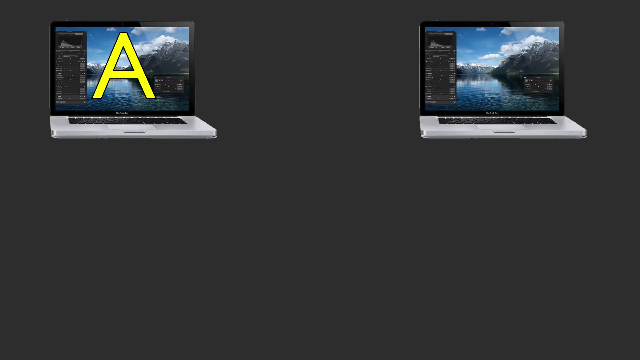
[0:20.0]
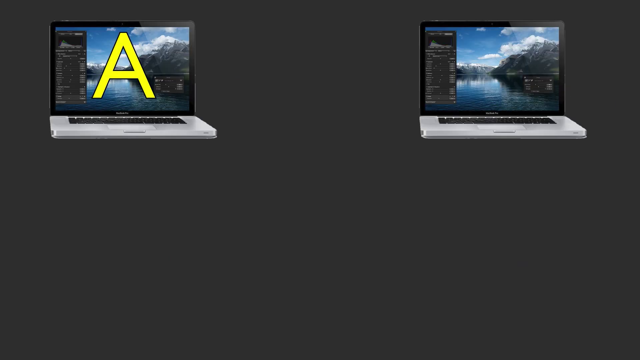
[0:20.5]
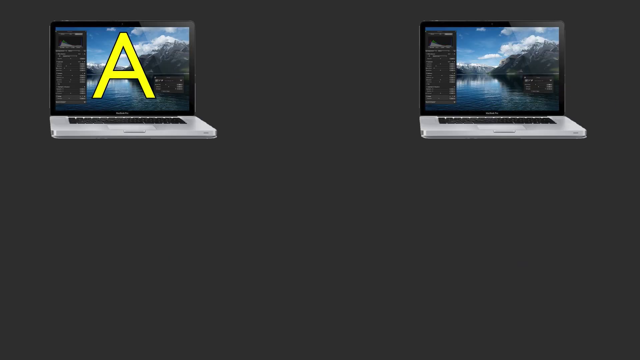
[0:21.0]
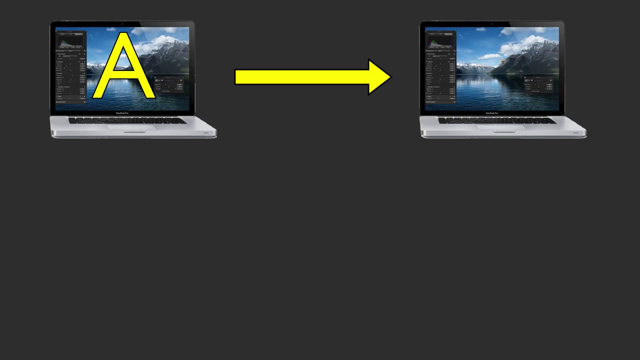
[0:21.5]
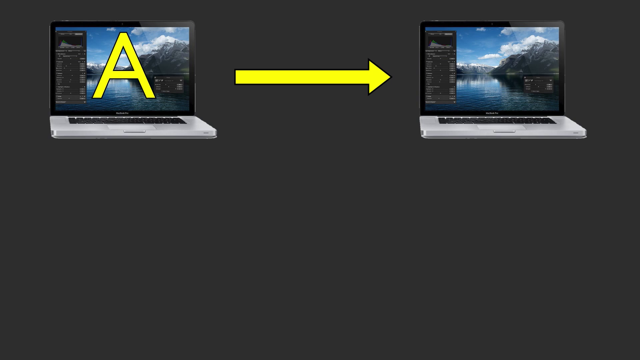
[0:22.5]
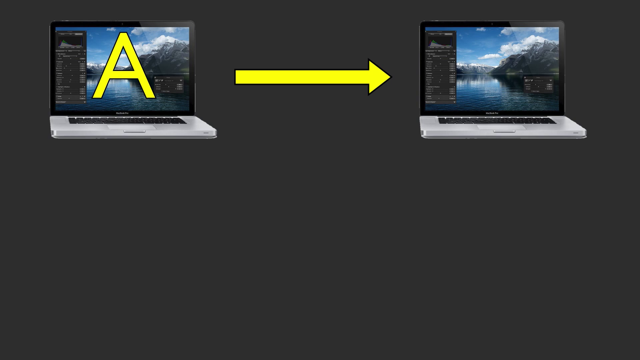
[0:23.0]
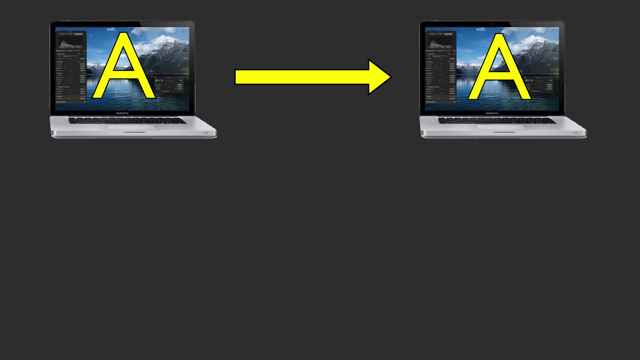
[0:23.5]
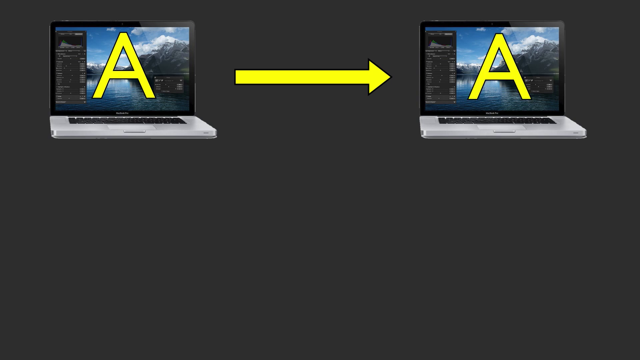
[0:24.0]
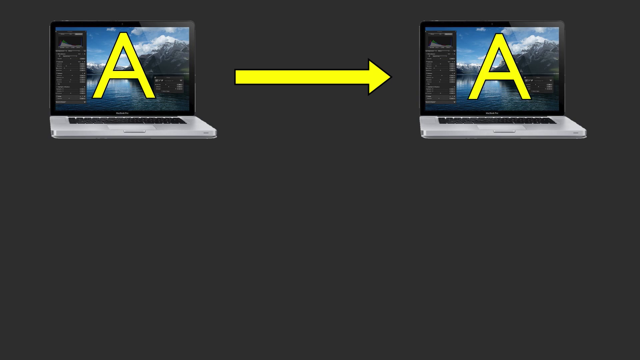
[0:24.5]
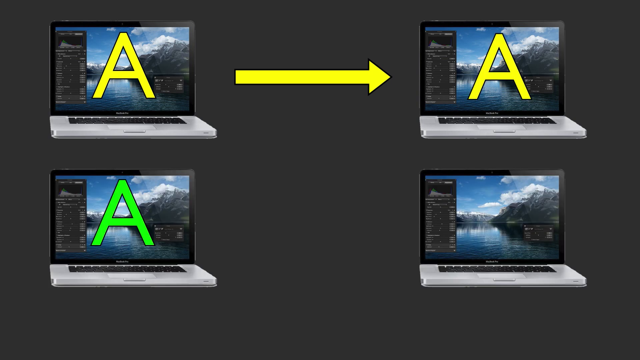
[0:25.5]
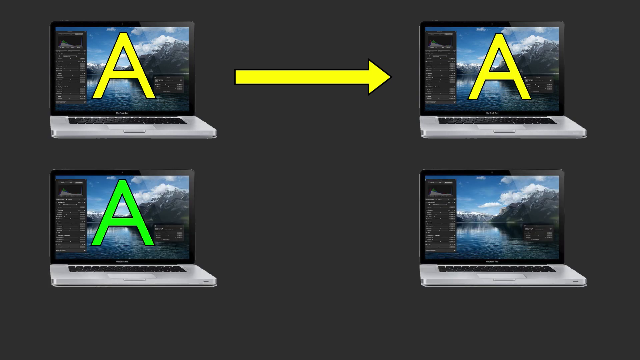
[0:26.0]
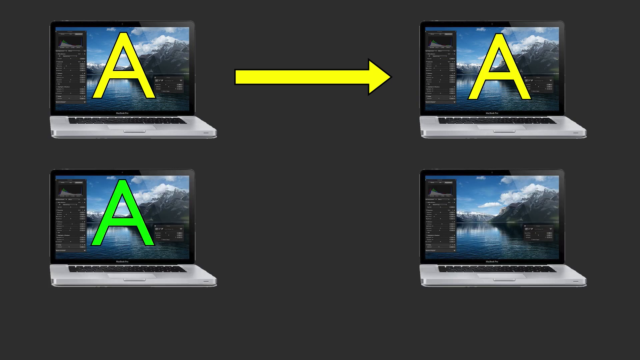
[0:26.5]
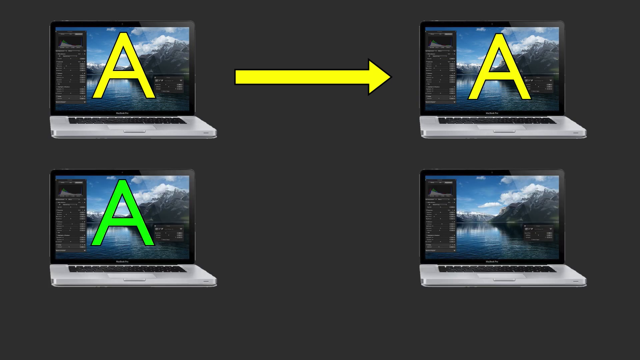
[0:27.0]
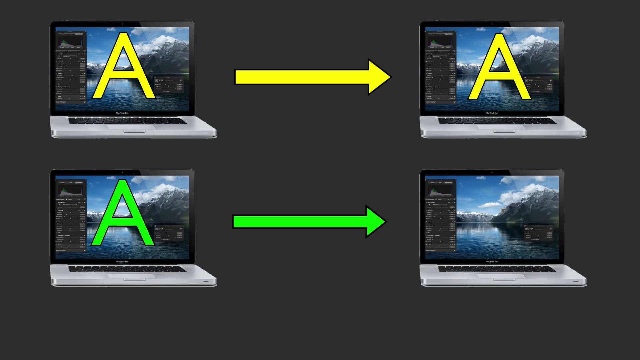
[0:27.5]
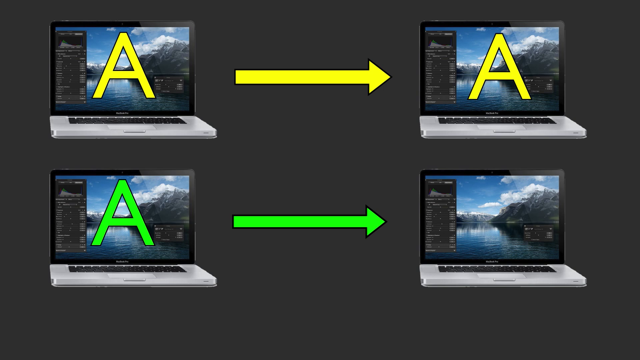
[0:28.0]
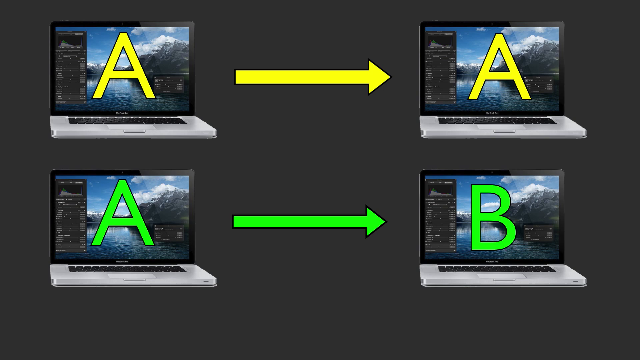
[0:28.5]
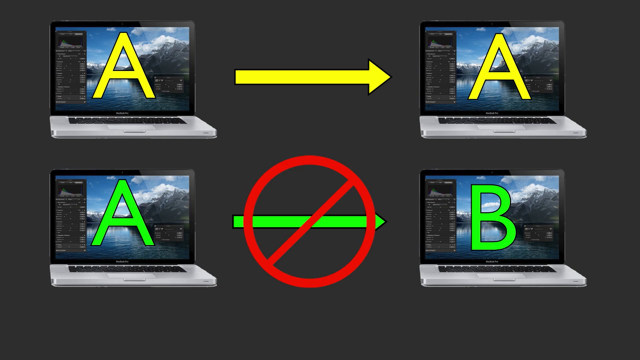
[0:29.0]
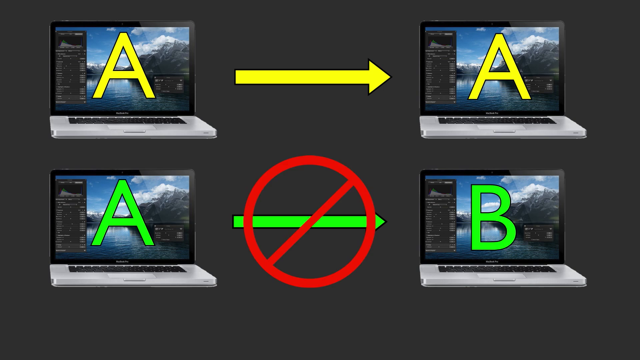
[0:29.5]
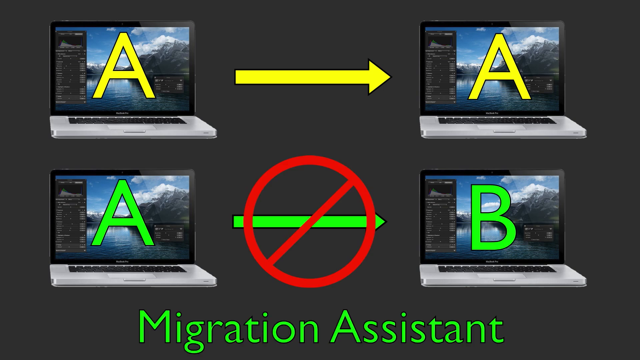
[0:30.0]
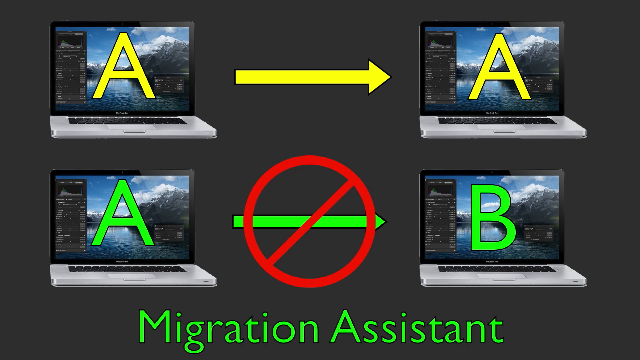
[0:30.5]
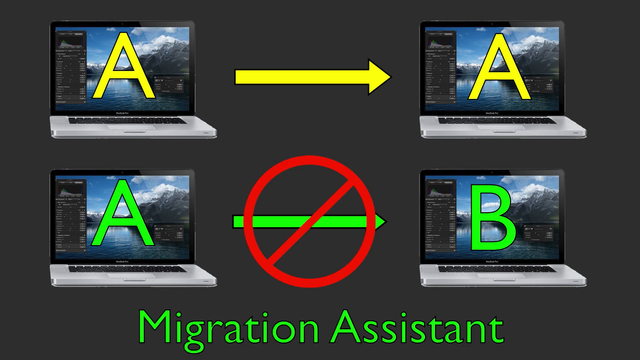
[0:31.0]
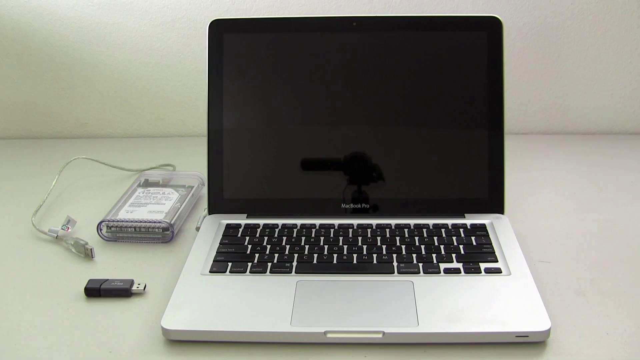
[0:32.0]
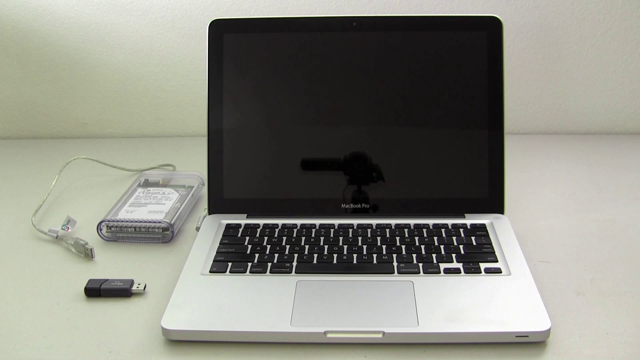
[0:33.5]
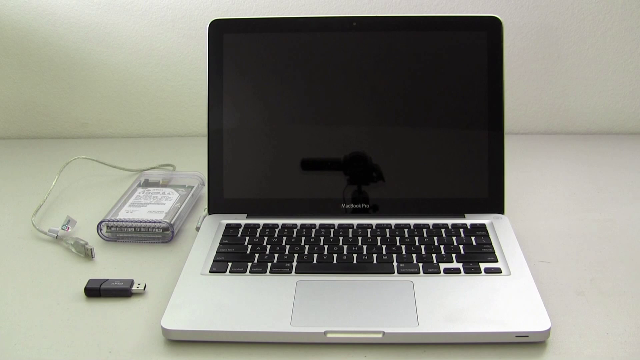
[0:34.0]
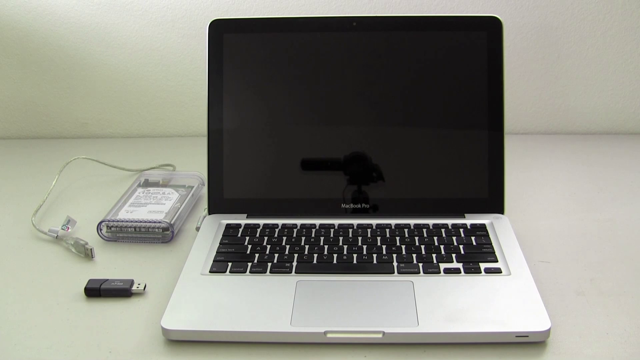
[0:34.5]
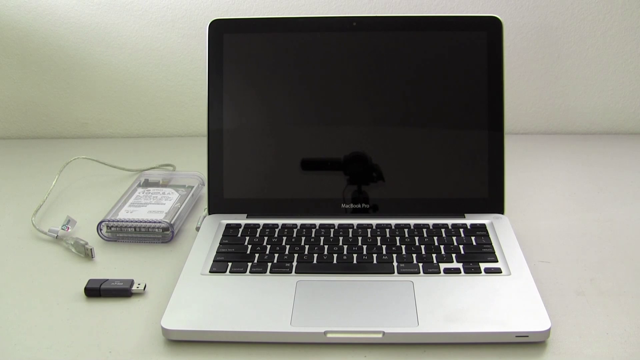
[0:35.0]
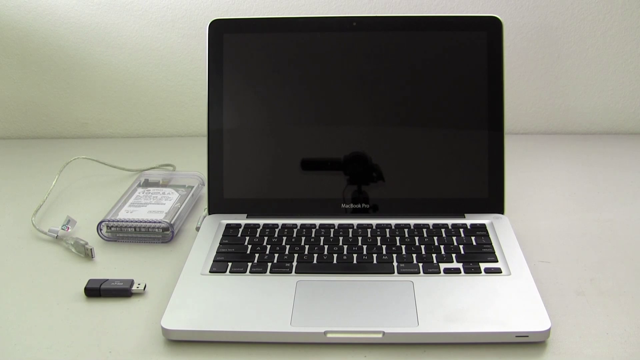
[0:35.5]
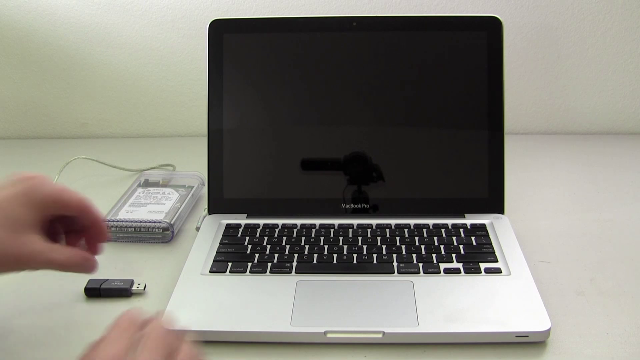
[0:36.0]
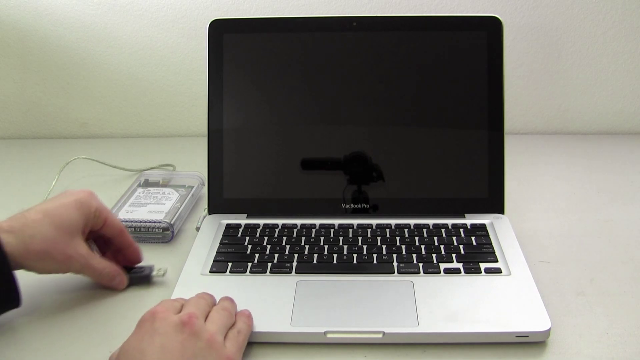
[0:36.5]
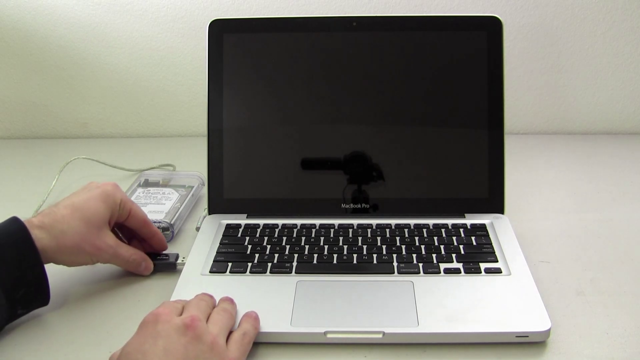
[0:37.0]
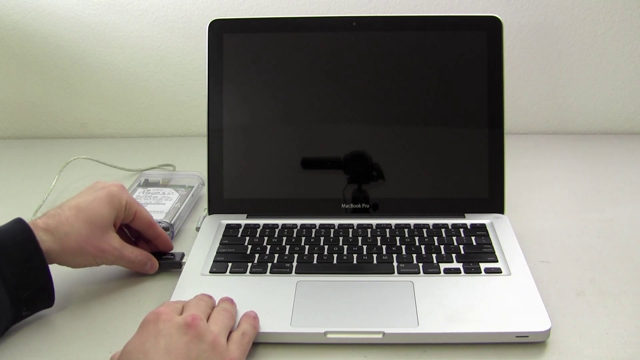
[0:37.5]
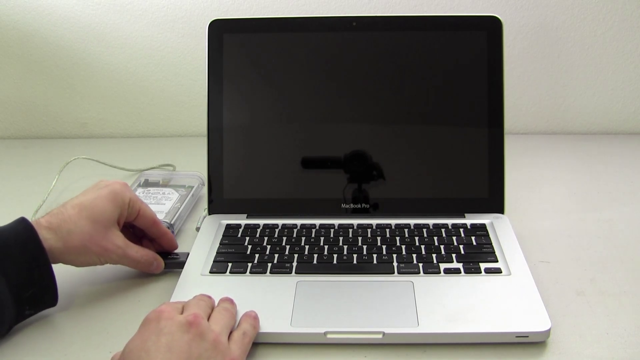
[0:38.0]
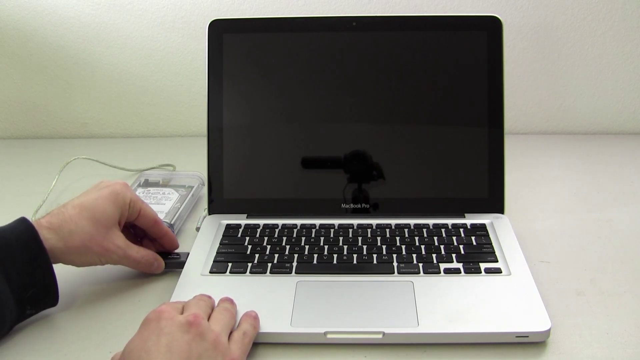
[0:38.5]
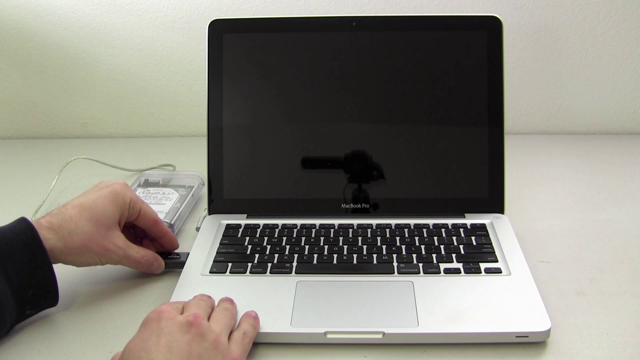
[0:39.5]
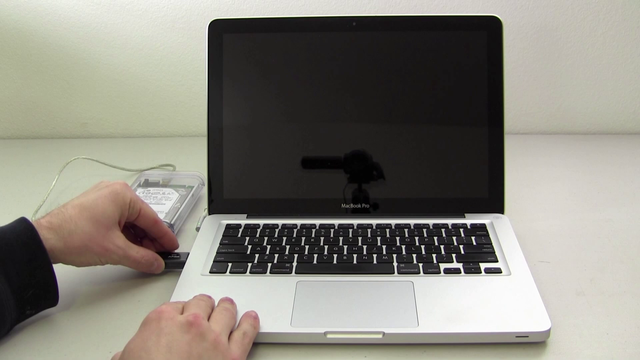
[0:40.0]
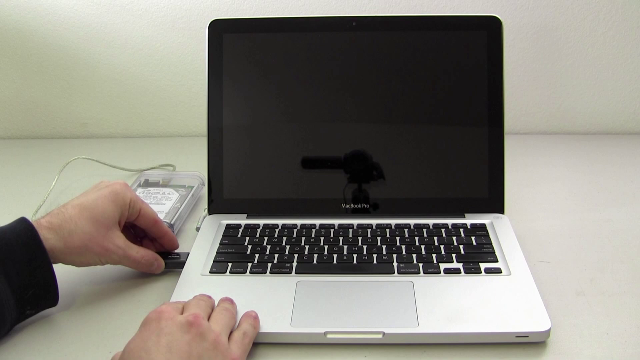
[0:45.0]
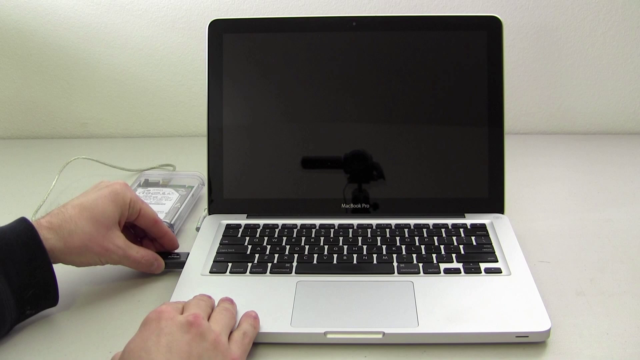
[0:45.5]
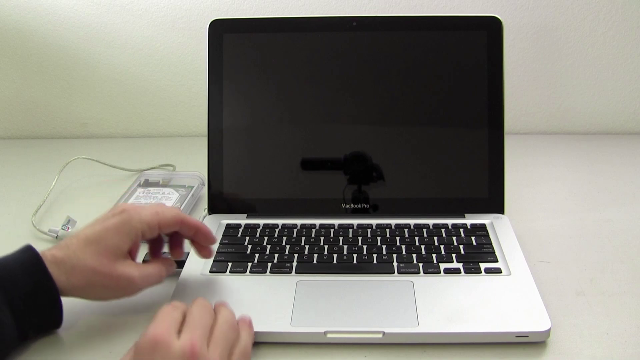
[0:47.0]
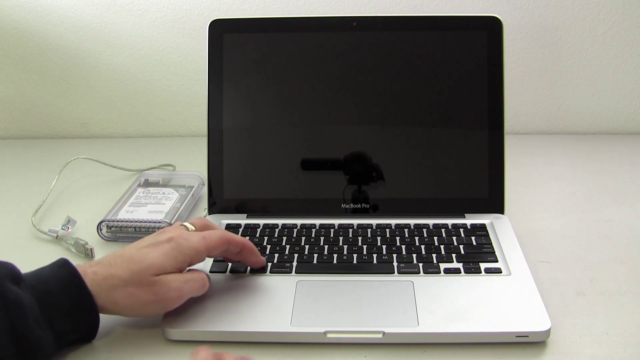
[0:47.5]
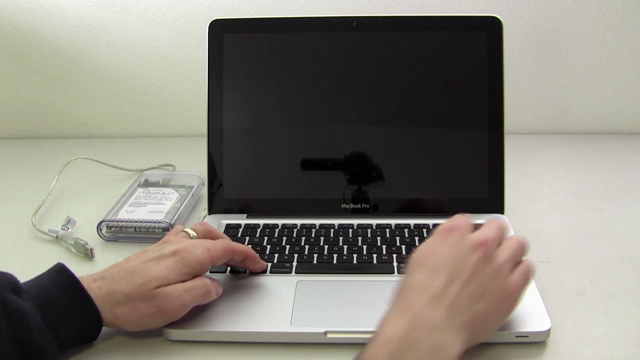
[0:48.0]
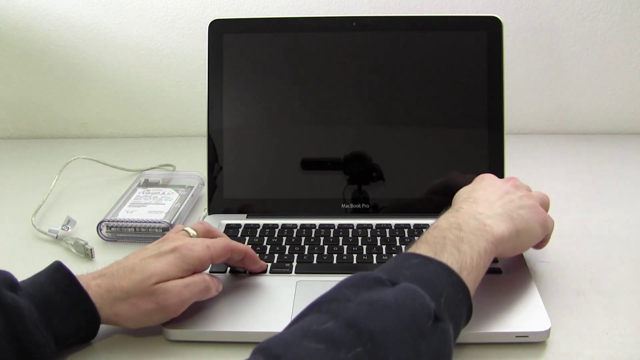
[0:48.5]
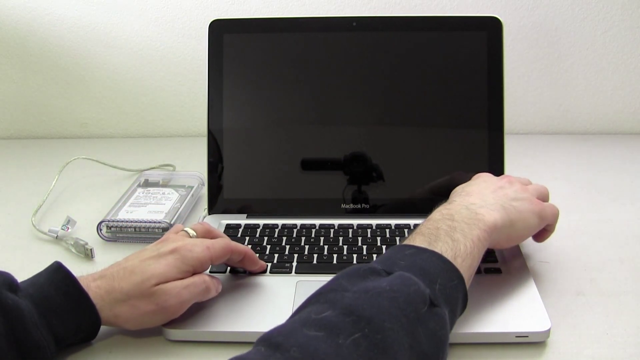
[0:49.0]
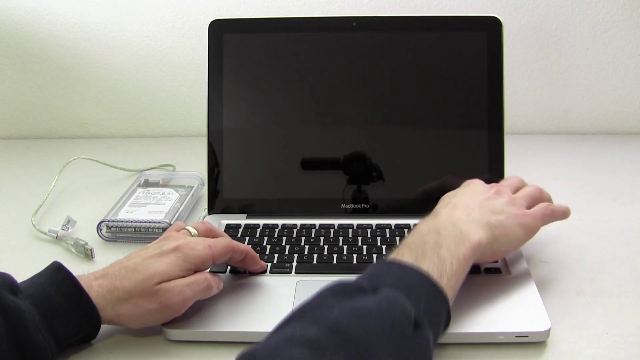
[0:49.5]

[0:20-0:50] Against the black backdrop are two computer screens, like laptop computers, with their keyboards visible as they are opened up; one is in the top left corner and one in the top right corner. Both show the same image, except the one on the left has the letter A, and a yellow arrow points from it to the other one, which also has the letter A. The A's are yellow as well. Two more computers then appear below the first two, making four on the screen. The lower pair has a green A with a green arrow pointing to a green B, and then a red circle with a line through it is placed over the arrow, apparently indicating that the top pair is correct and the bottom pair is not. The video then transitions to an open laptop, kind of white, with a blank screen, on a desk. There are some devices around it, including a flash drive and another device. The person grabs the flash drive and plugs it into the laptop, still trying to get it to go in. The person then appears to push a couple of buttons, pressing Control and then Enter.